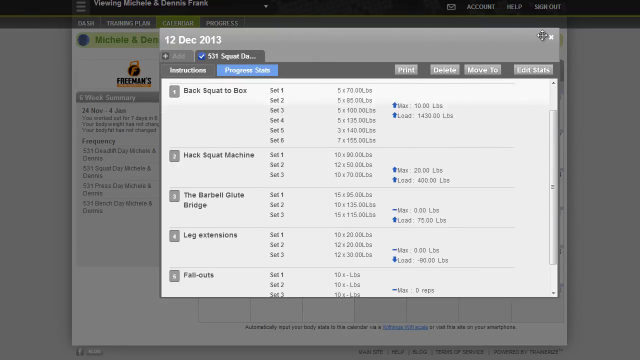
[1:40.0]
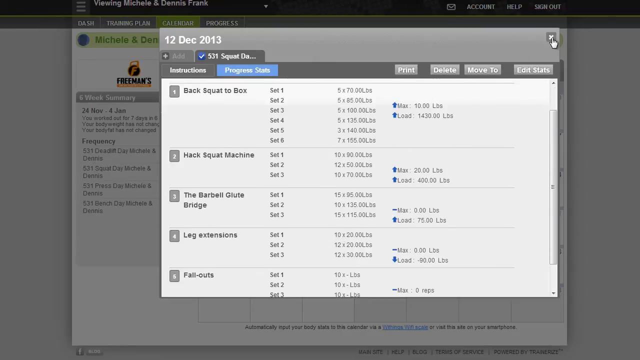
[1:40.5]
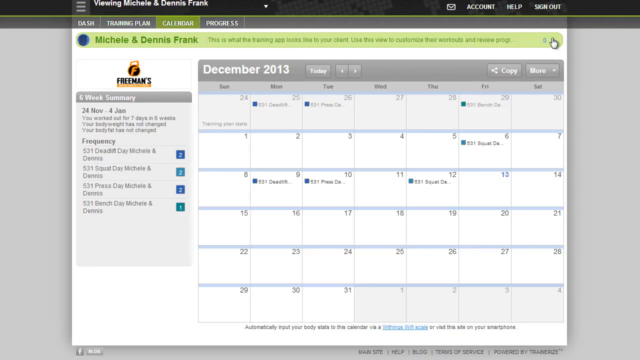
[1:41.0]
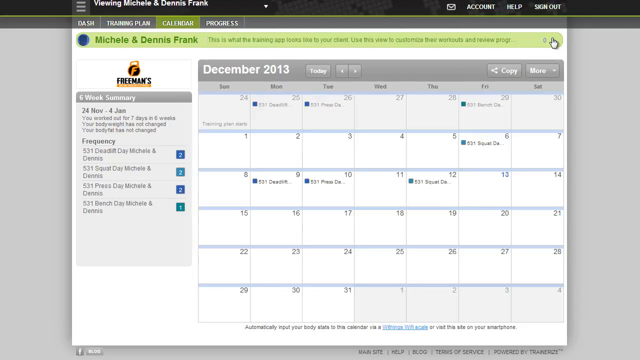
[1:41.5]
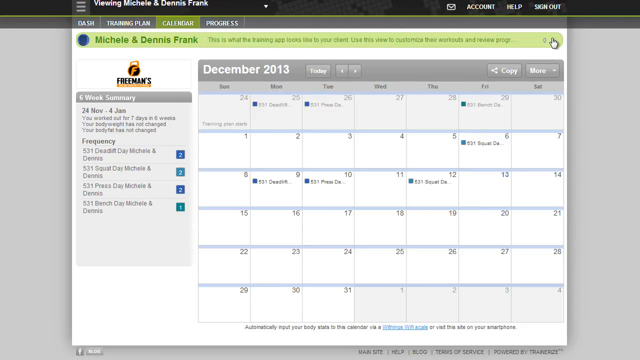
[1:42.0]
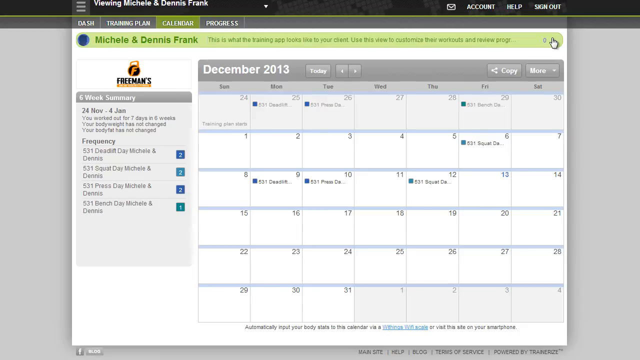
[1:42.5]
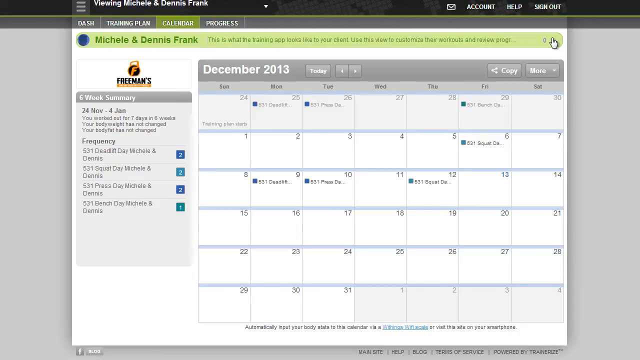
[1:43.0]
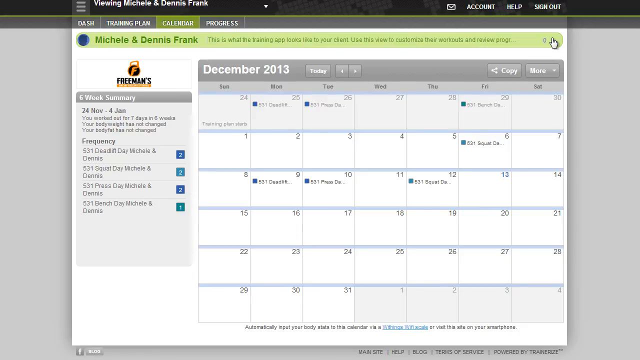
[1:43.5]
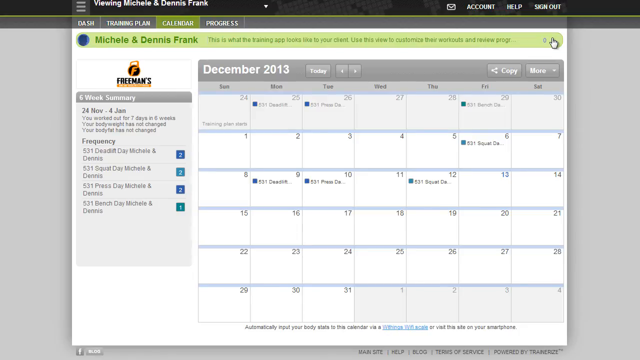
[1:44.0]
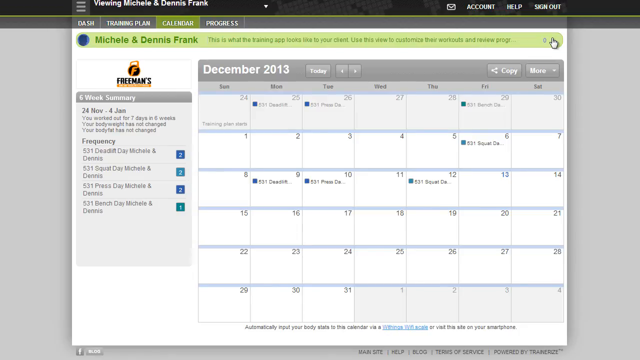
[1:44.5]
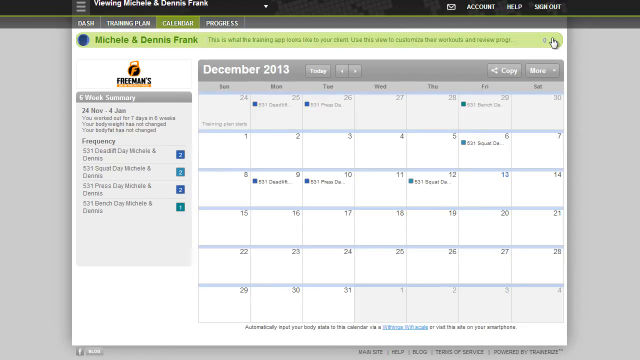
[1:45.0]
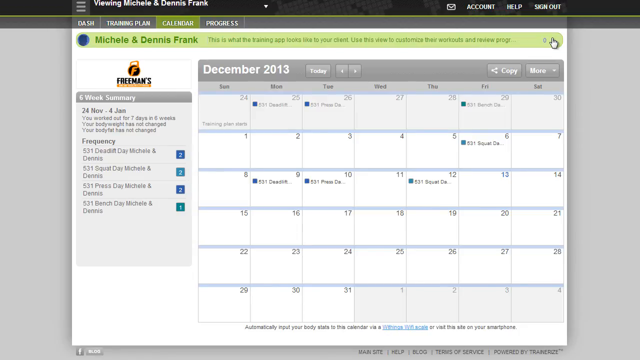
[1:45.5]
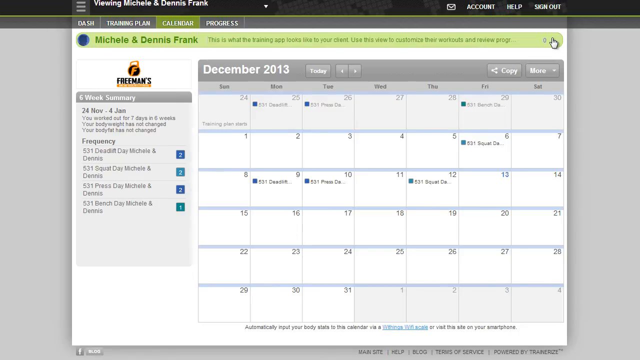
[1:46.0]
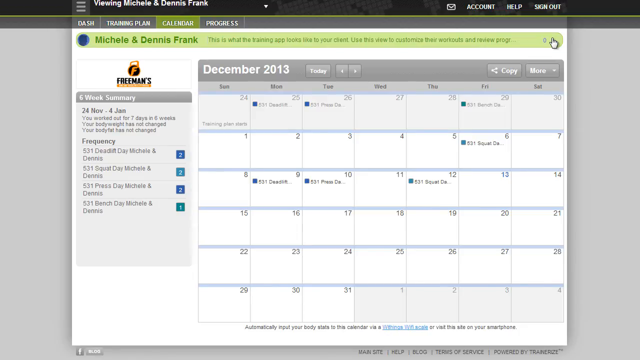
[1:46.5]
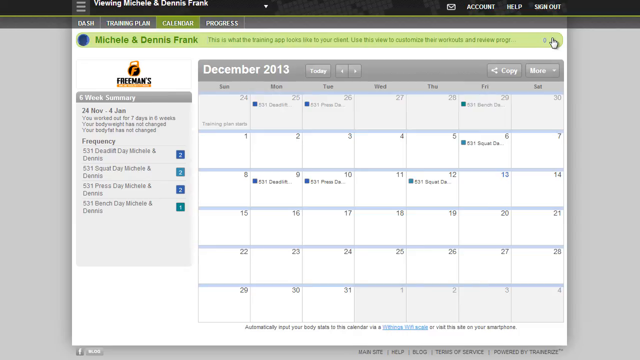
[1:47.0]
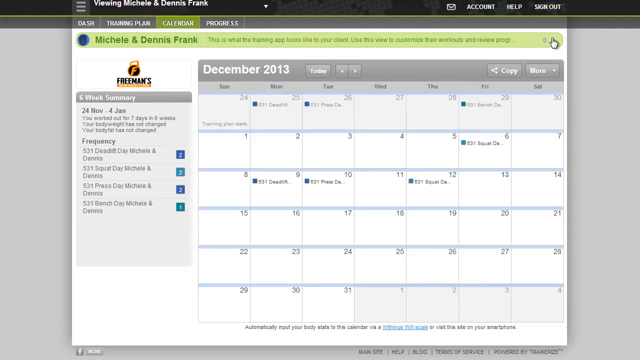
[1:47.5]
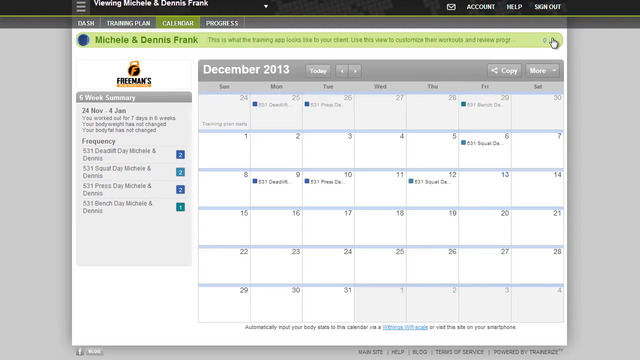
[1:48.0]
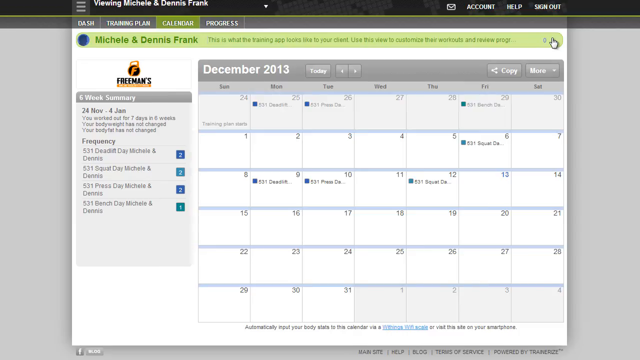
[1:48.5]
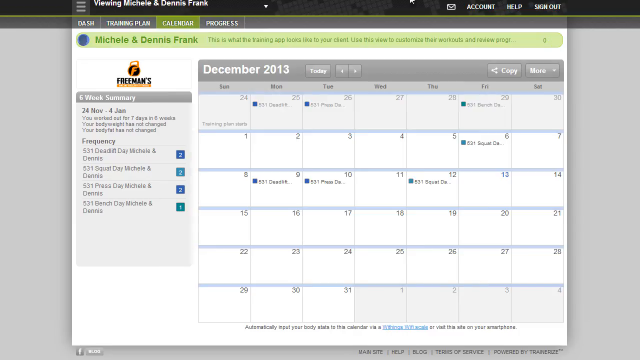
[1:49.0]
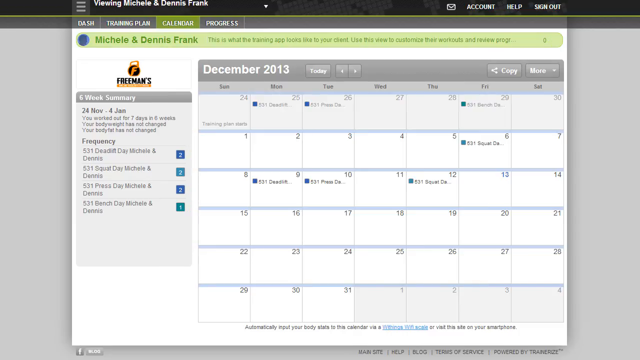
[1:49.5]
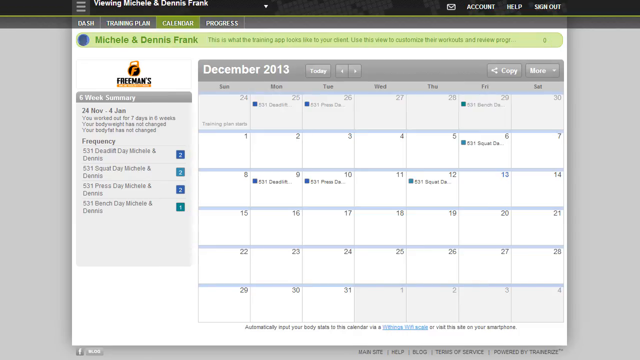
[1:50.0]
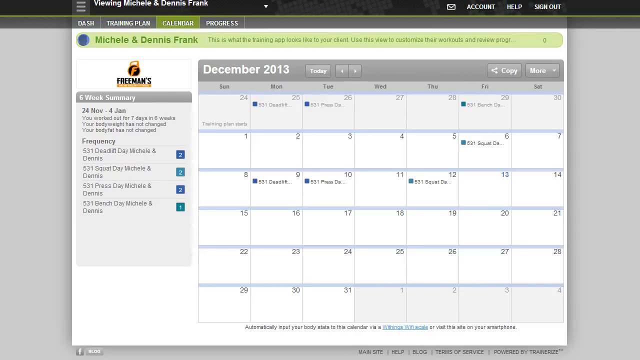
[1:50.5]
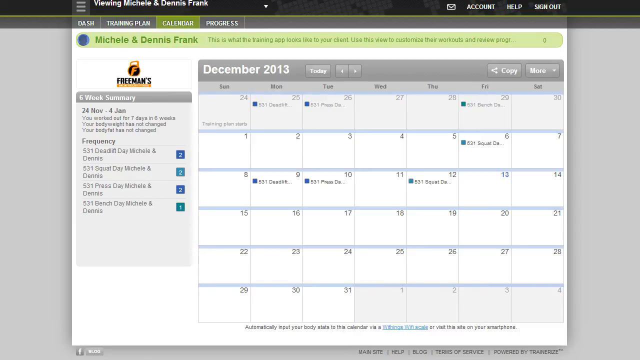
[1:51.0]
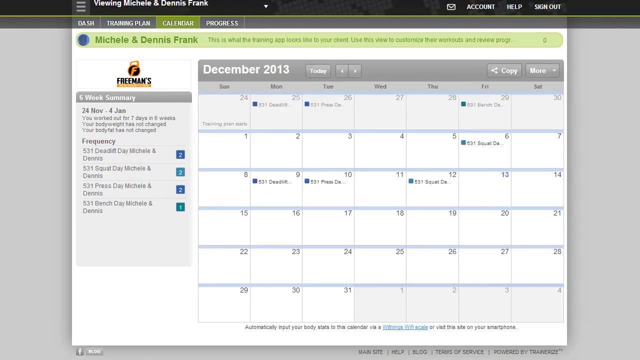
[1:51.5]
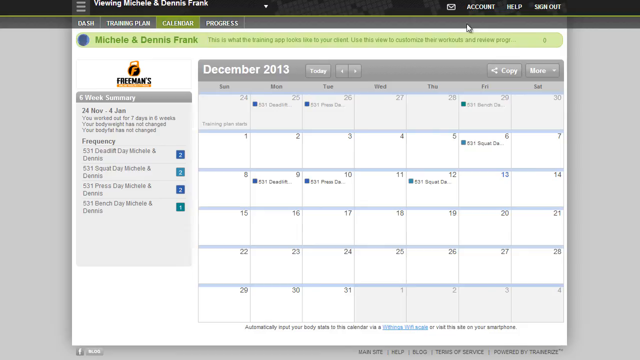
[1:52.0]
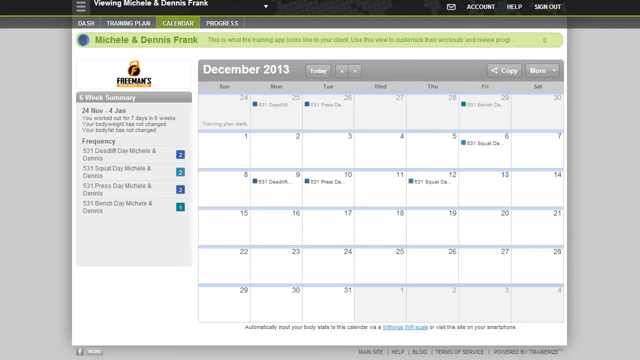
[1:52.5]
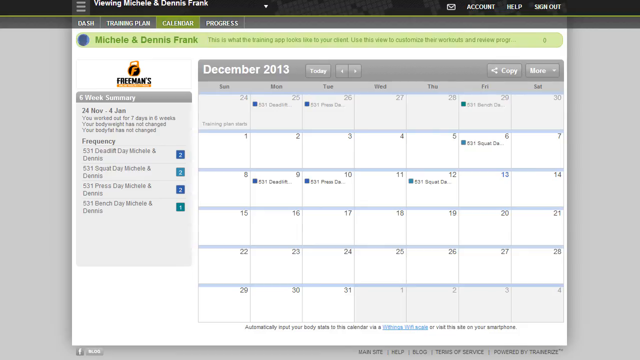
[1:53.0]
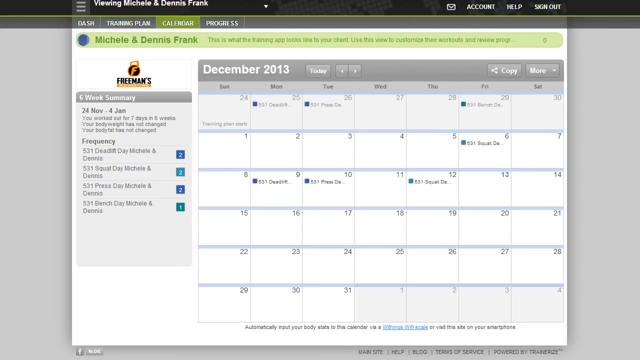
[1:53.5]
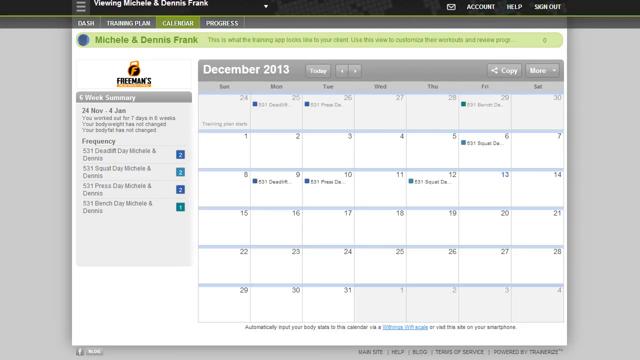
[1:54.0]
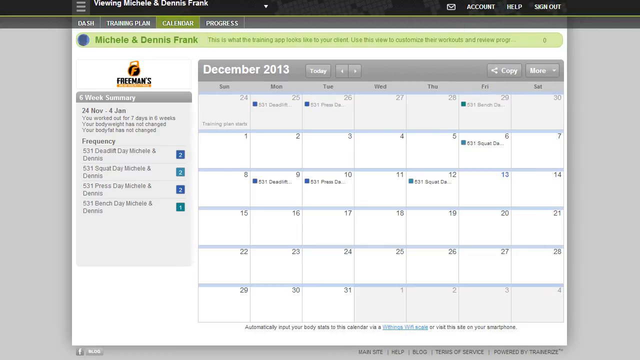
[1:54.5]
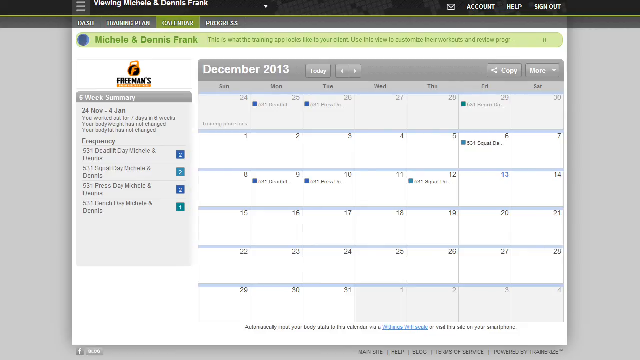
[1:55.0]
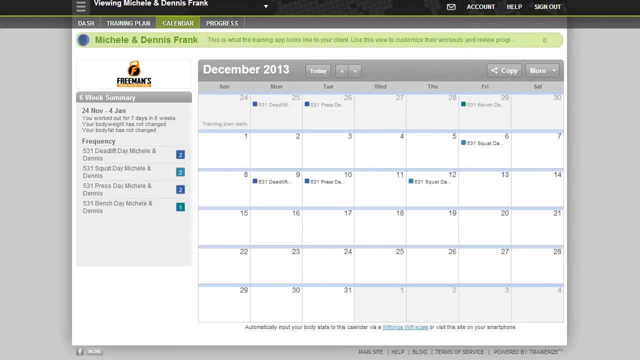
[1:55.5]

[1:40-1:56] A computer screen shows a calendar. The very top left-hand corner reads "viewing Michelle and Dennis Frank," and beneath it are four tabs side by side: "Dash," "training plan," "calendar" and "progress." Below is a long lime-green stripe across the whole top of the page, beginning with "Michelle and Dennis Frank" and, to the right, text reading "this is what the training app looks like to your client" and "use this view to customize their workouts and review progress." Beneath that is a calendar headed "December 2013" in white, with every day of the month shown as white squares.